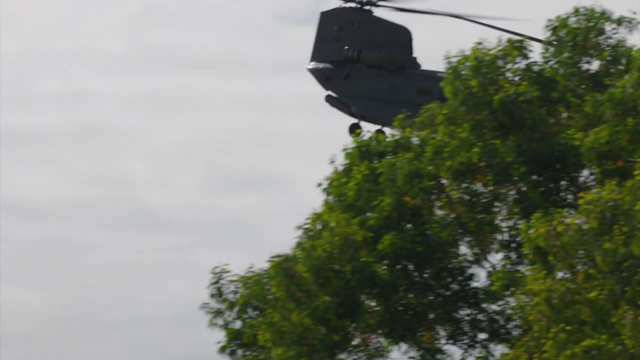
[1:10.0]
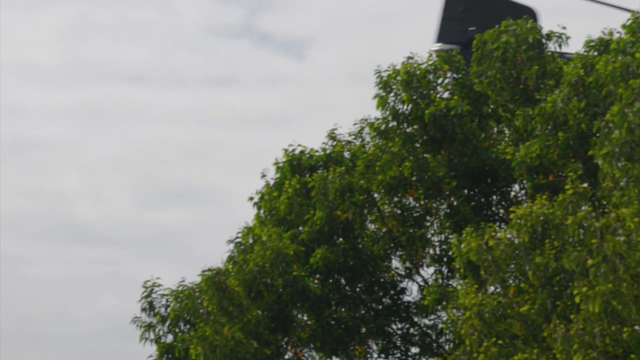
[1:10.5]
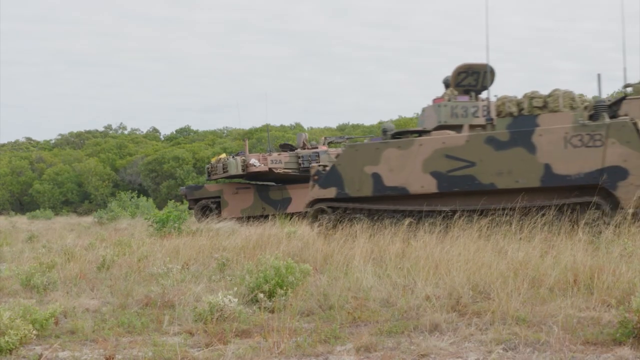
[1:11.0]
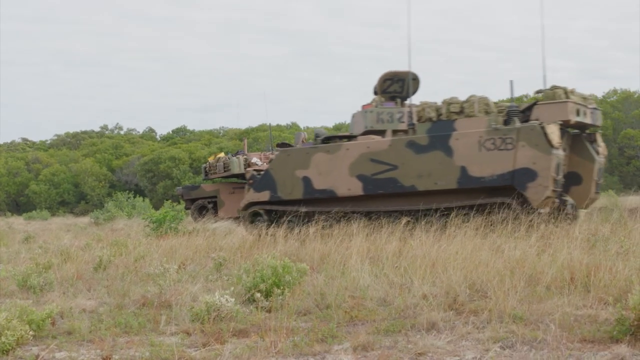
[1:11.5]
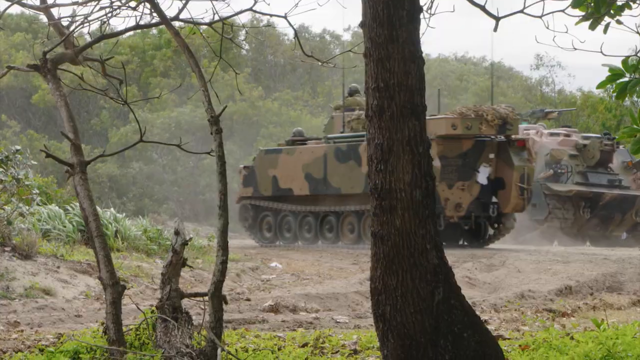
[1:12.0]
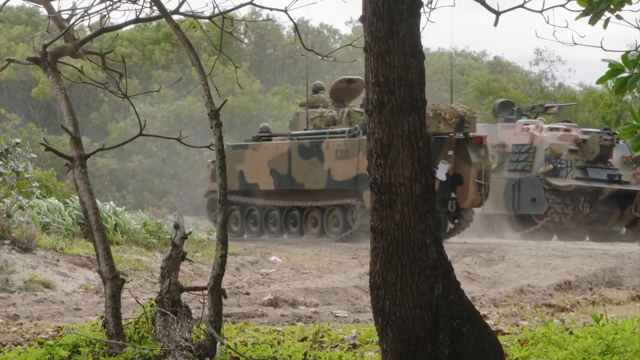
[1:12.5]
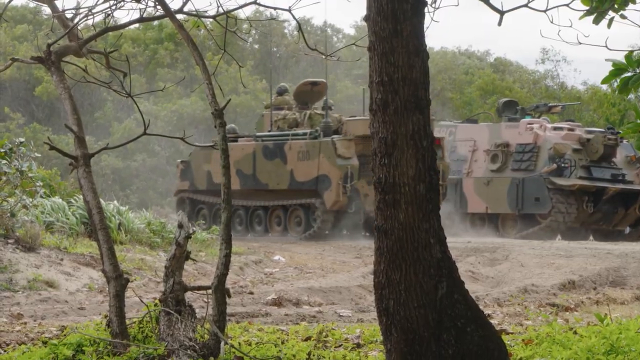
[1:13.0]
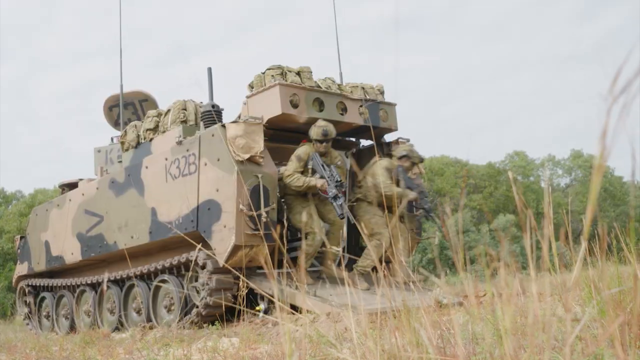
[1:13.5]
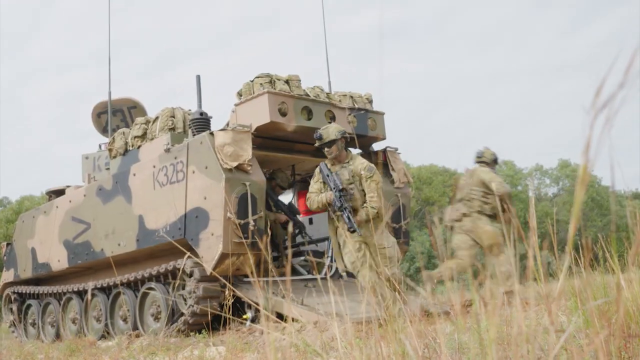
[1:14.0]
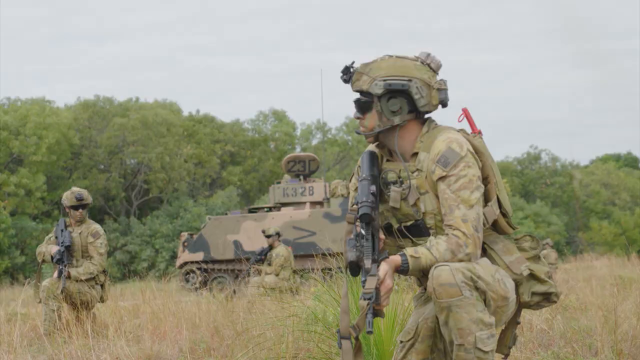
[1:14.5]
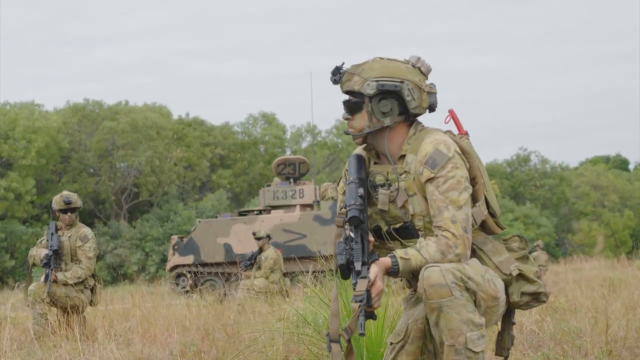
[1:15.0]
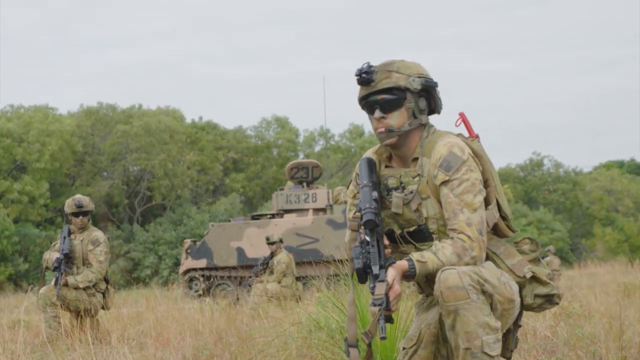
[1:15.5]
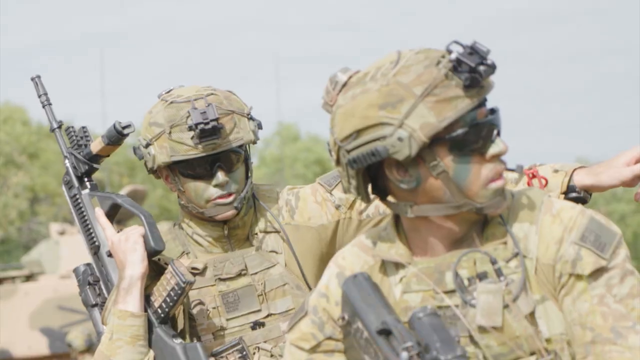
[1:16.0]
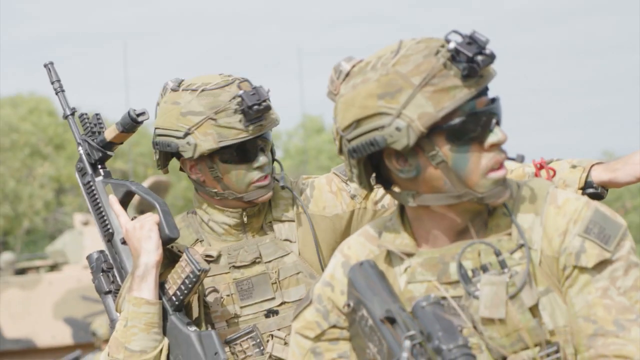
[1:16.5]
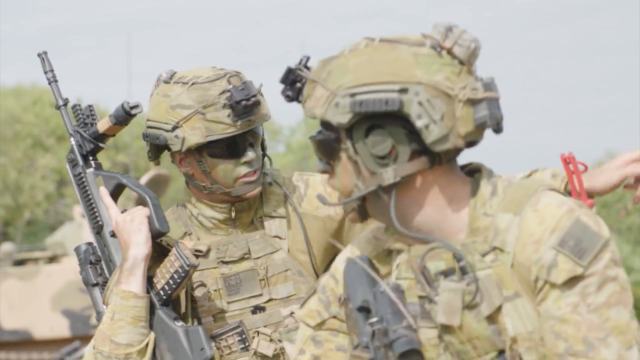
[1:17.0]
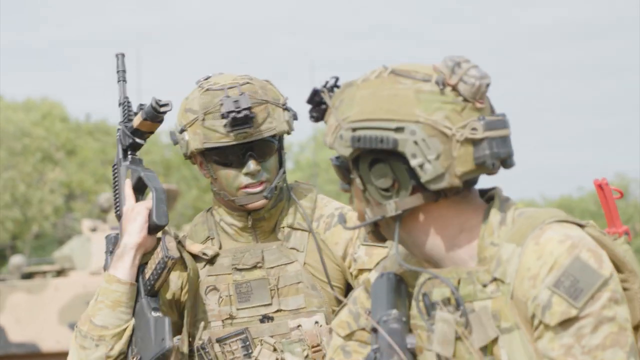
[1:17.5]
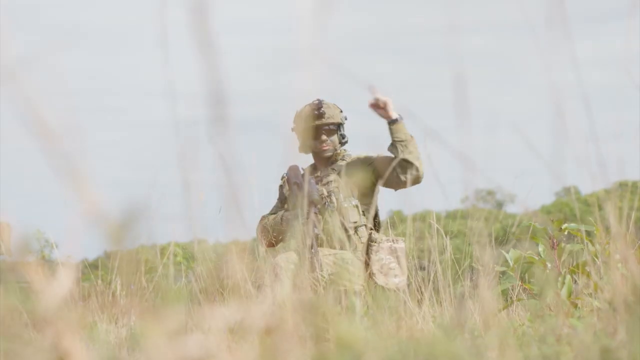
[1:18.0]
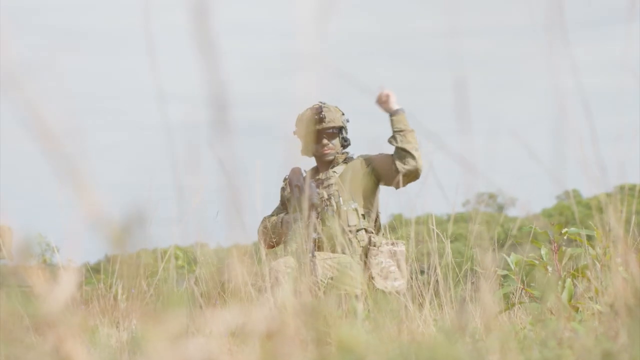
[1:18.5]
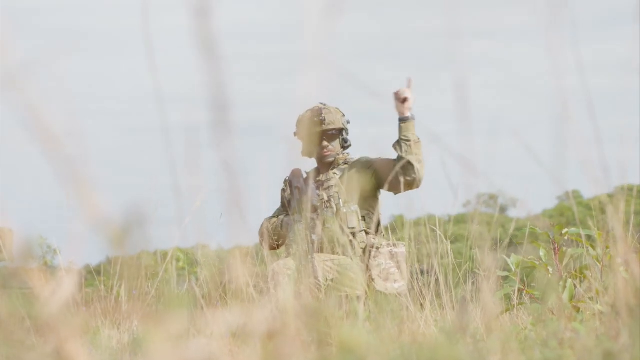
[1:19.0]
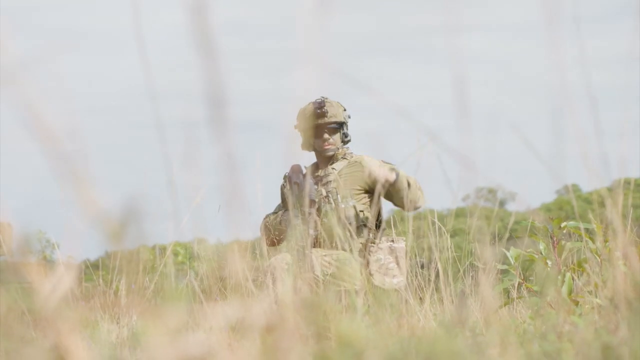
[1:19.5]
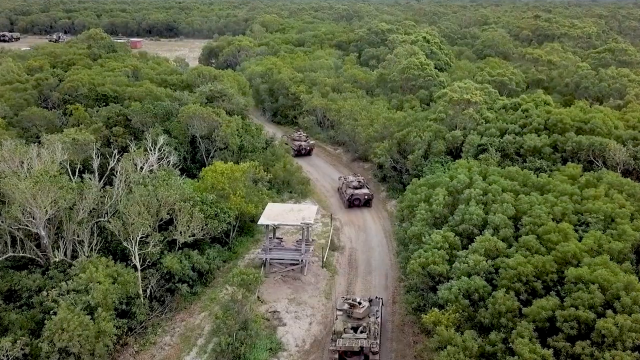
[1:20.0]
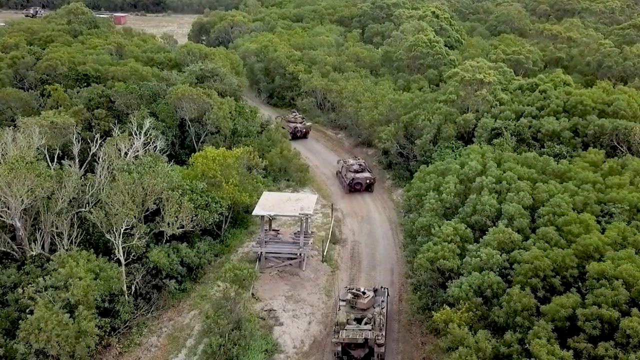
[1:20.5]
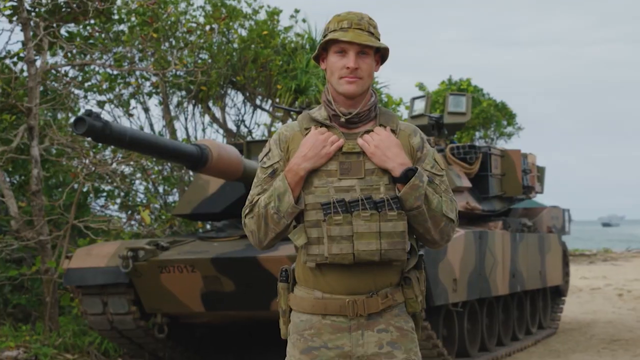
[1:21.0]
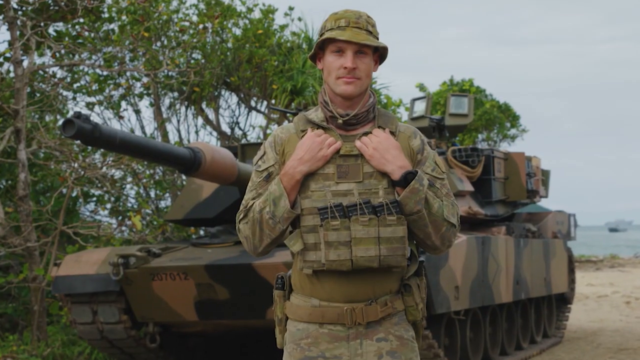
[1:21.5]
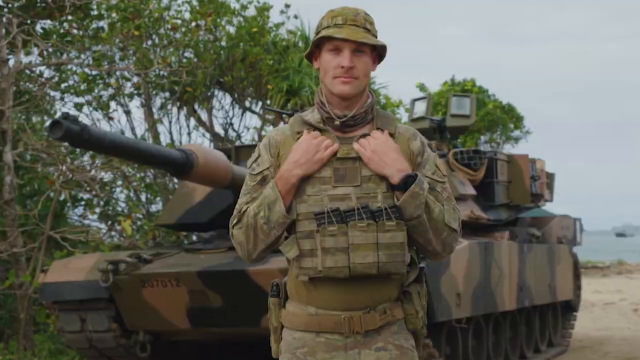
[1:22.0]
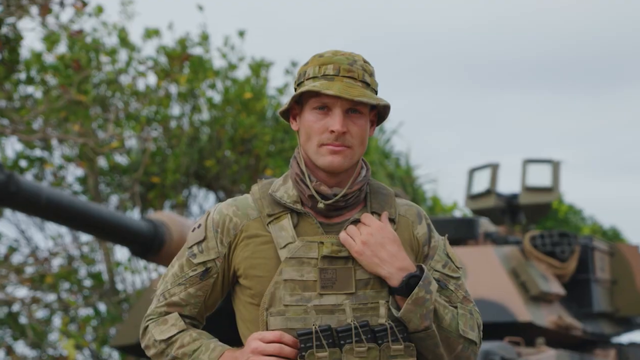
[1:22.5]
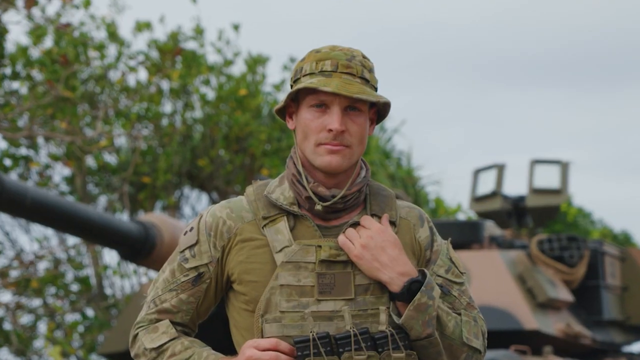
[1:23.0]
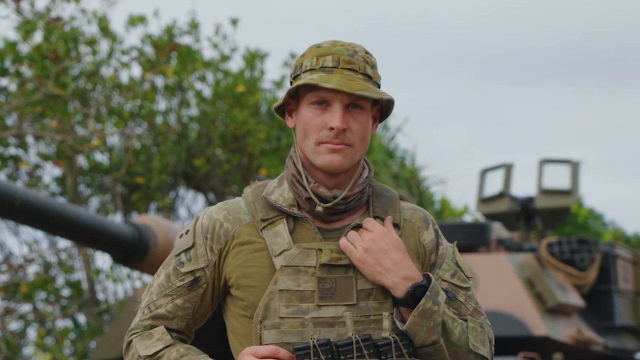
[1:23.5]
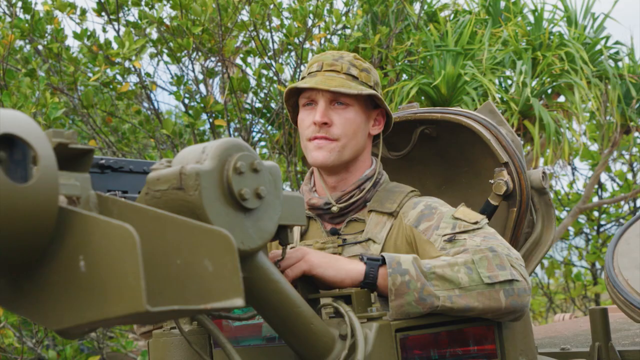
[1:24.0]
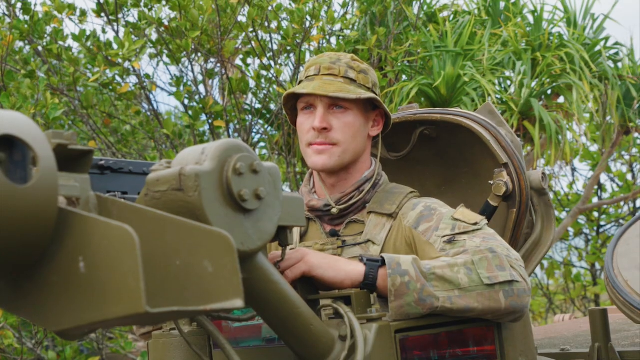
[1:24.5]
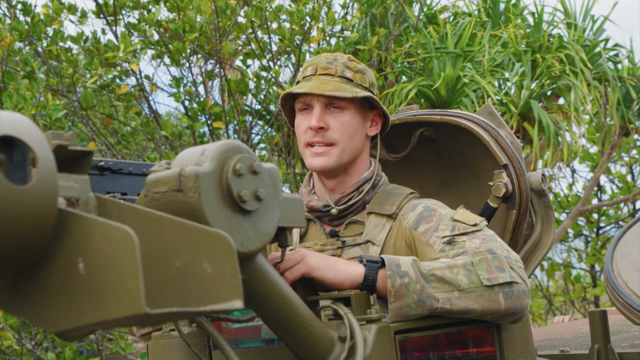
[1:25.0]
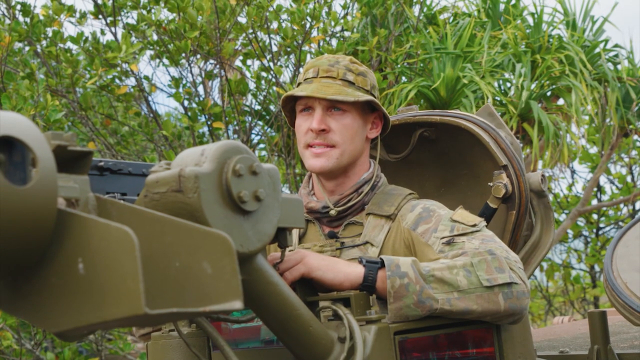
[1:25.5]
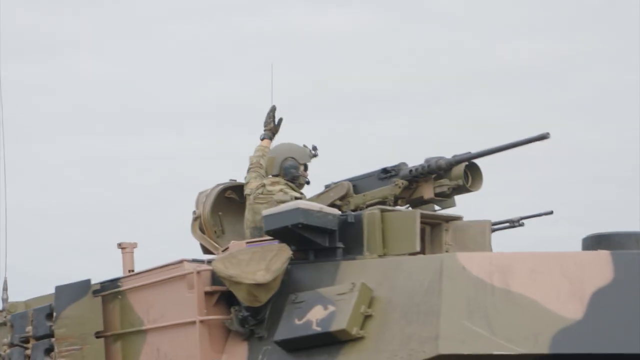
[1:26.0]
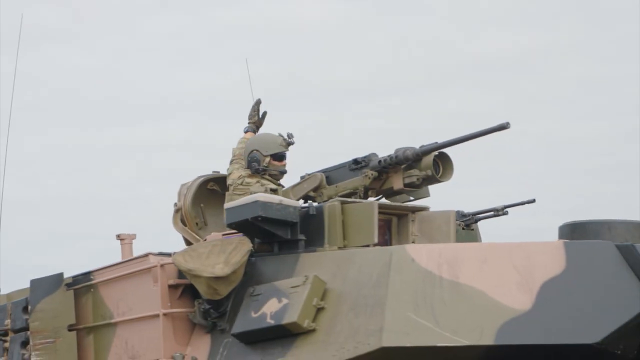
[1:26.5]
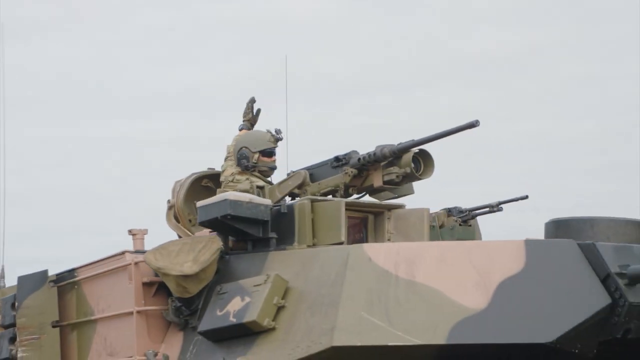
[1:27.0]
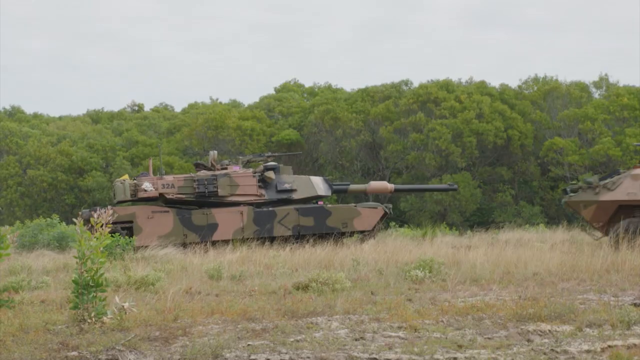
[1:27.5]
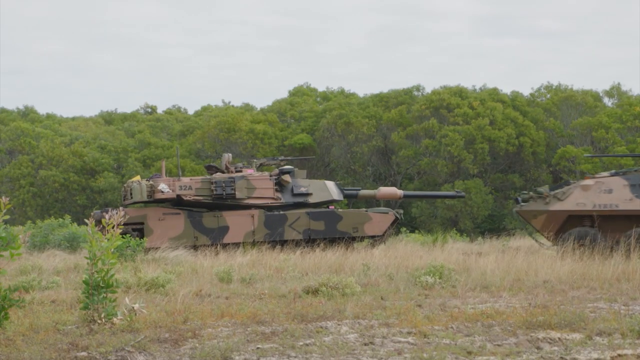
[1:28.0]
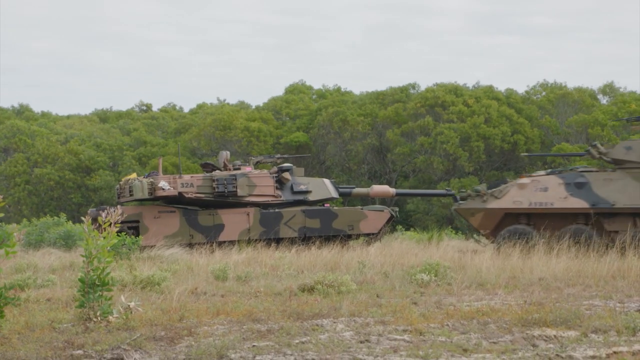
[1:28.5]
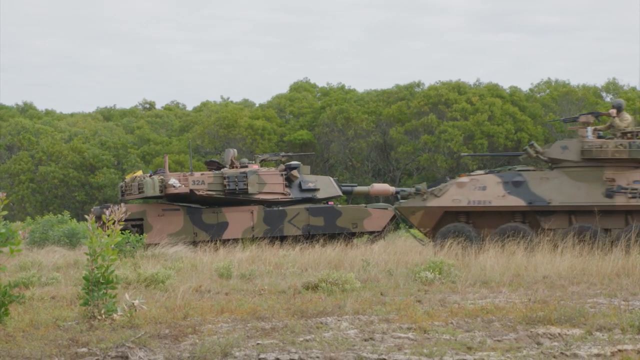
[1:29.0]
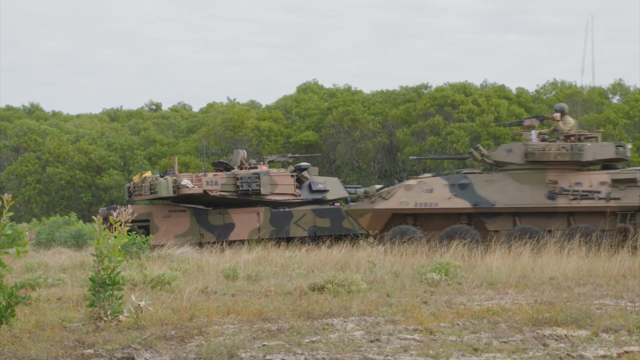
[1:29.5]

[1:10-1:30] The back end of a helicopter, its rotor spinning and its wheels visible, goes behind a large green tree. Once the helicopter goes away, the camera pans to the tankers in lush grass and dense trees. Army personnel jump off the back of a tanker with guns in hand. They are dressed in army camouflage with painted faces, and all wear sunglasses, vests, and cameras on their helmets. One army officer points with his left hand while another moves his hand around in a circular motion. An aerial view shows army tankers driving along a path with lush green vegetation on either side. A single army member in a vest, army uniform and bucket hat stands in front of an army tank; a close-up of the same individual follows, and then he speaks inside the tank. Multiple tanks with officers in them are shown.